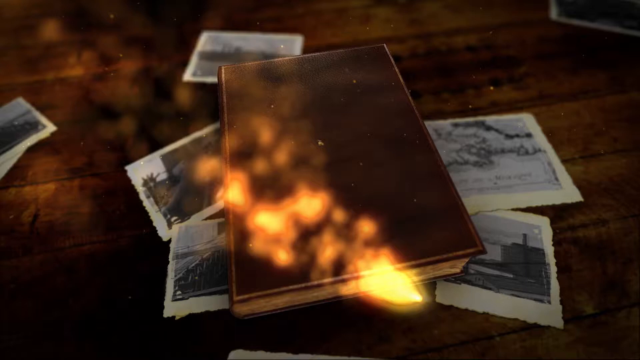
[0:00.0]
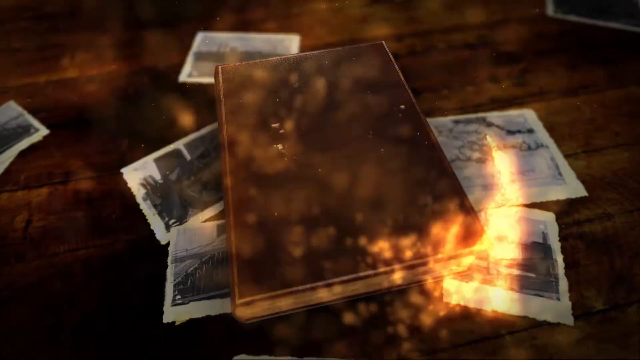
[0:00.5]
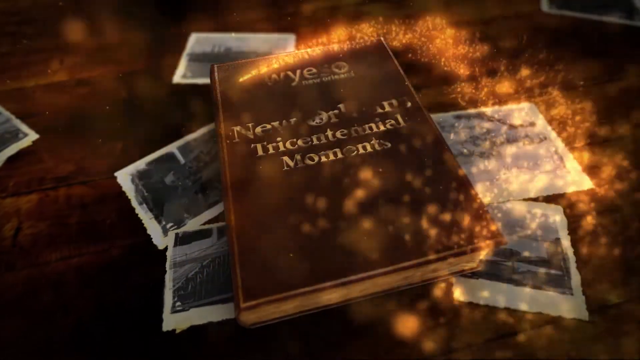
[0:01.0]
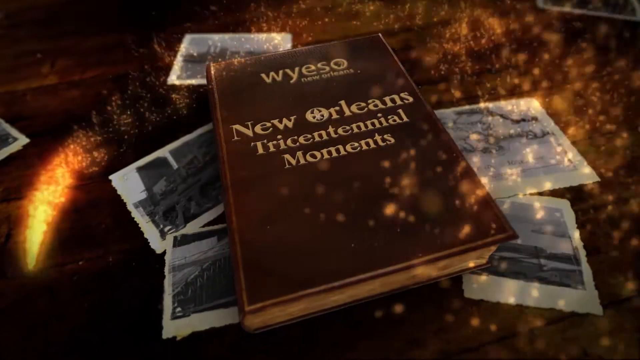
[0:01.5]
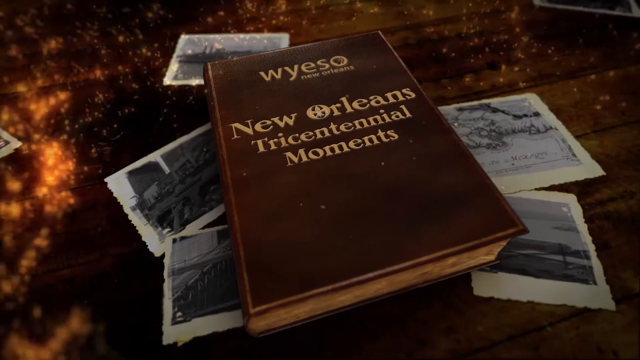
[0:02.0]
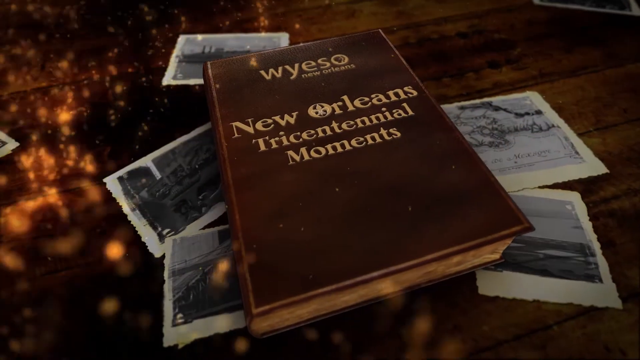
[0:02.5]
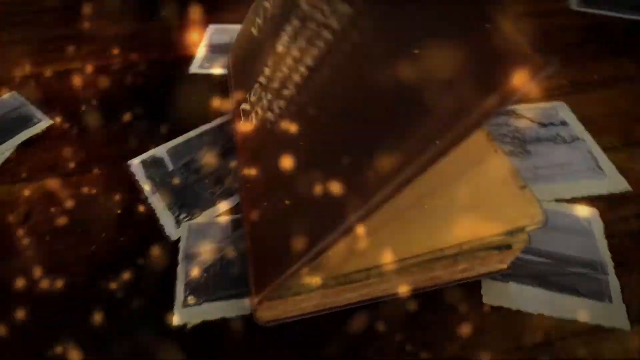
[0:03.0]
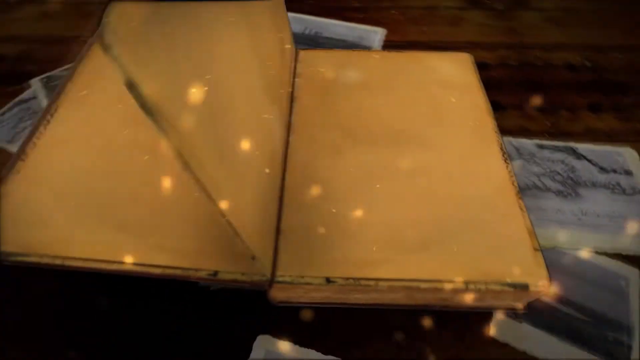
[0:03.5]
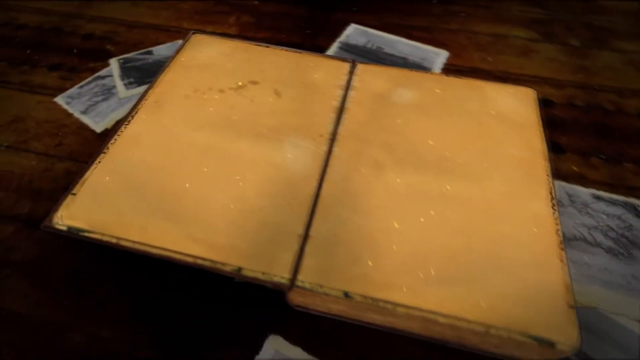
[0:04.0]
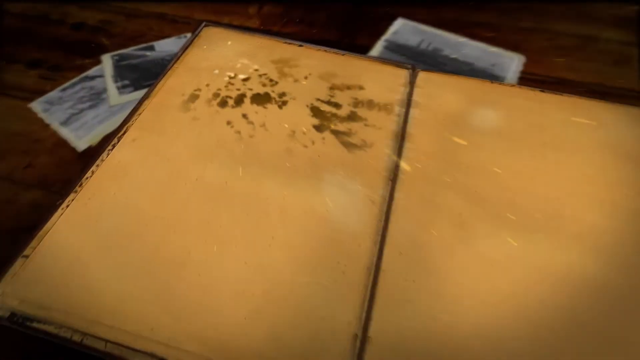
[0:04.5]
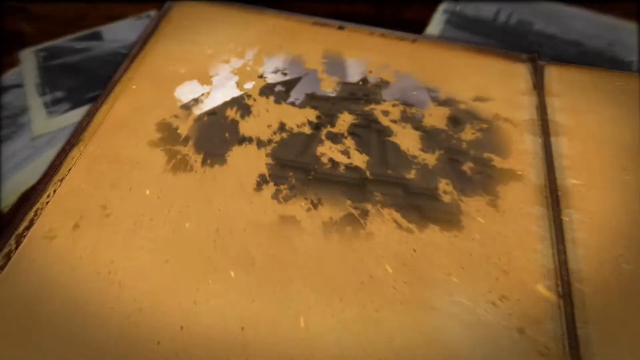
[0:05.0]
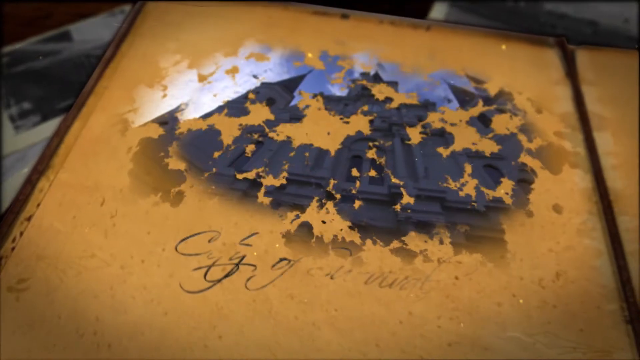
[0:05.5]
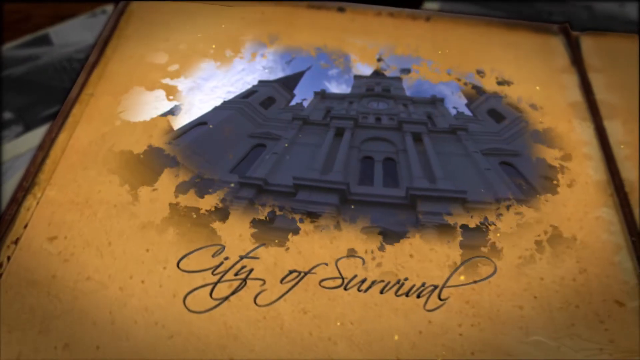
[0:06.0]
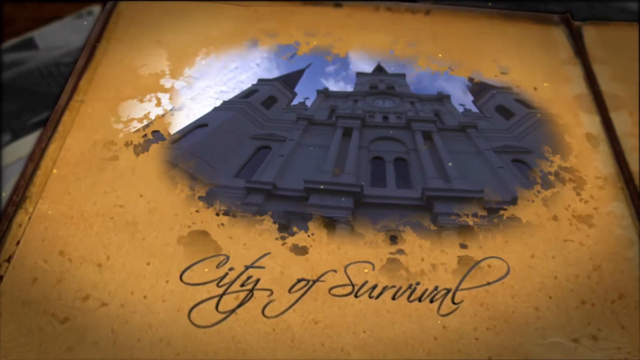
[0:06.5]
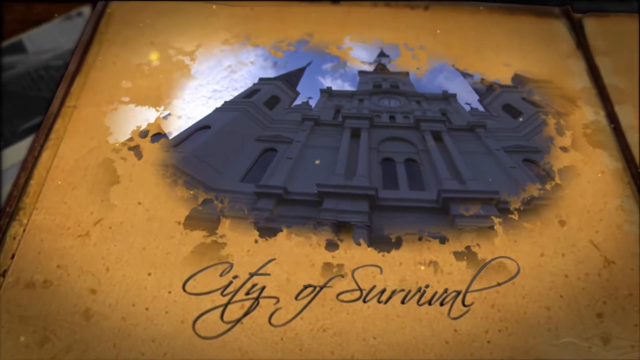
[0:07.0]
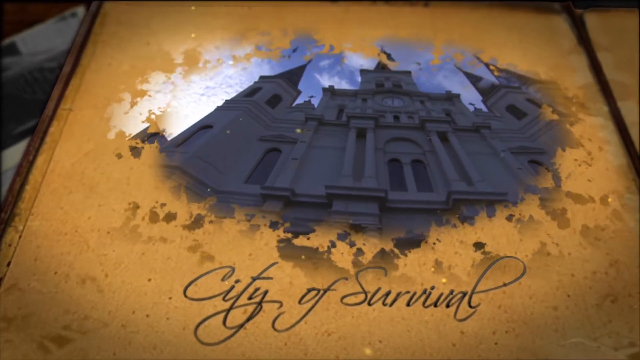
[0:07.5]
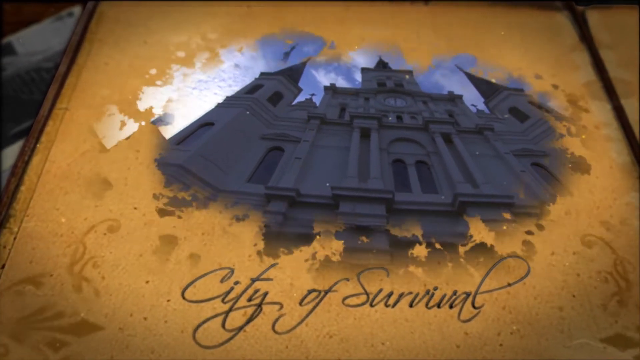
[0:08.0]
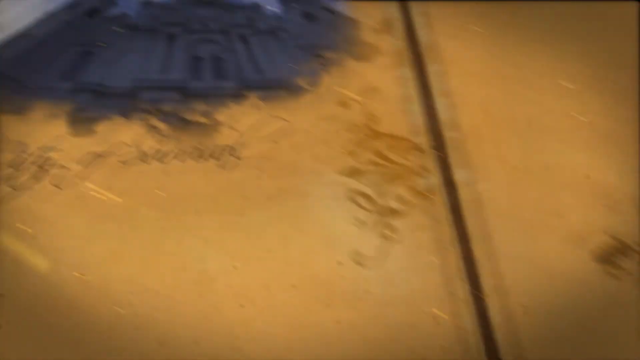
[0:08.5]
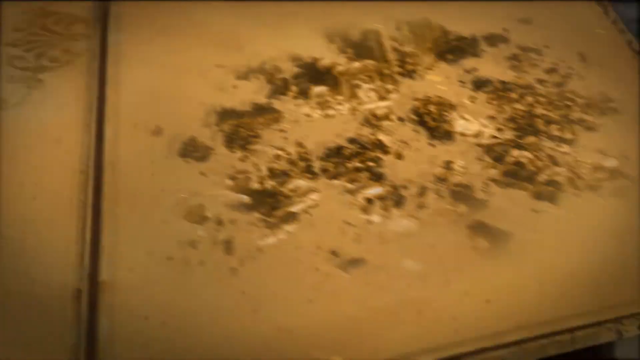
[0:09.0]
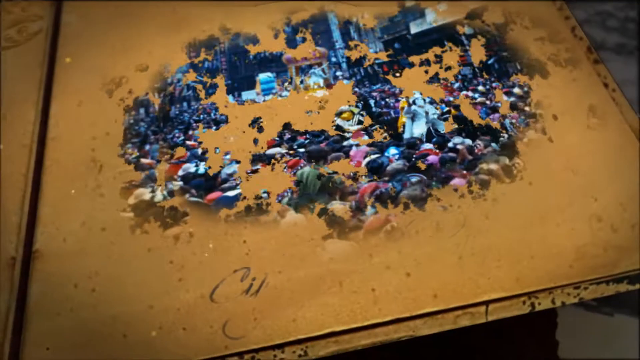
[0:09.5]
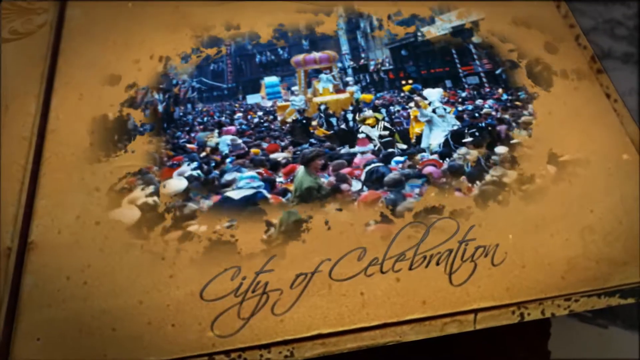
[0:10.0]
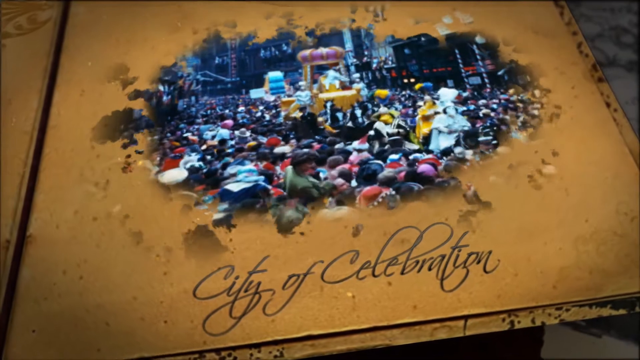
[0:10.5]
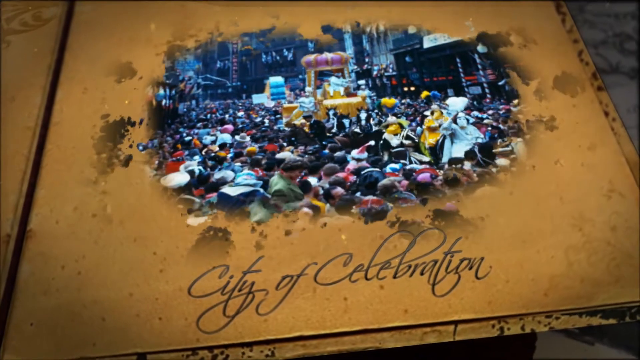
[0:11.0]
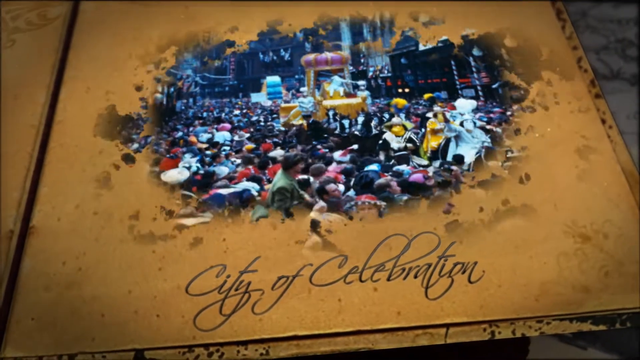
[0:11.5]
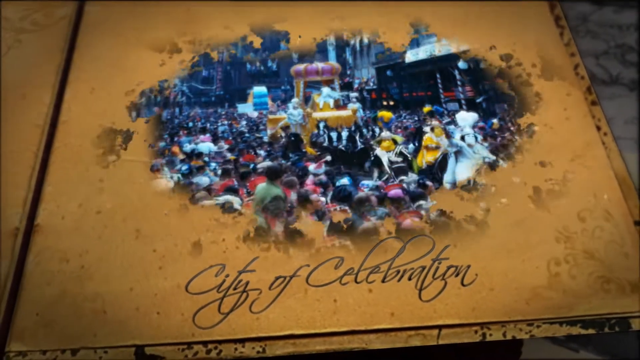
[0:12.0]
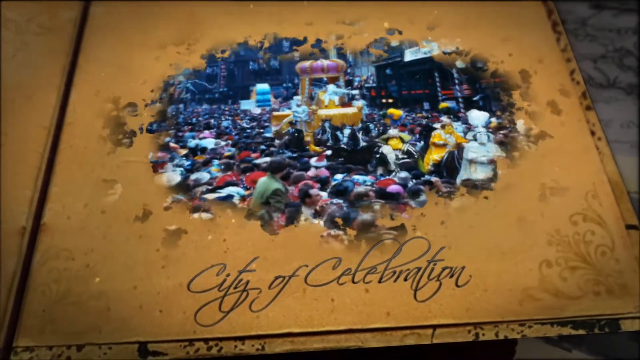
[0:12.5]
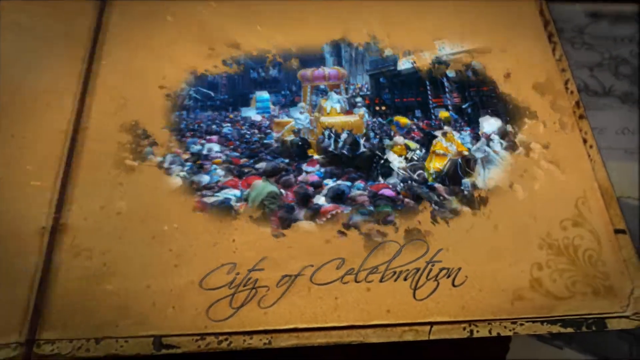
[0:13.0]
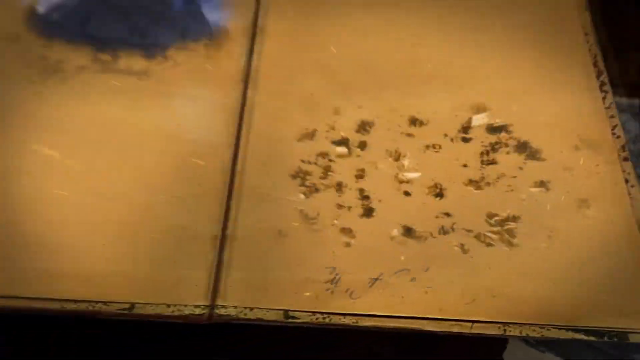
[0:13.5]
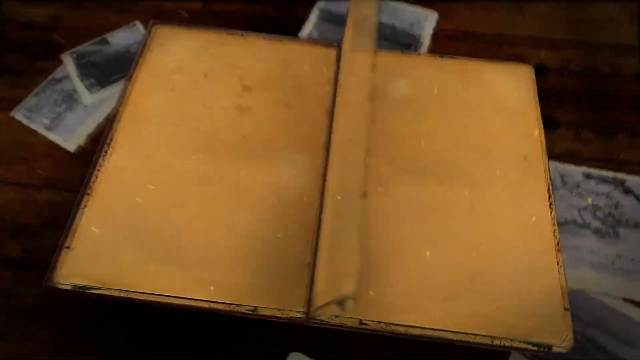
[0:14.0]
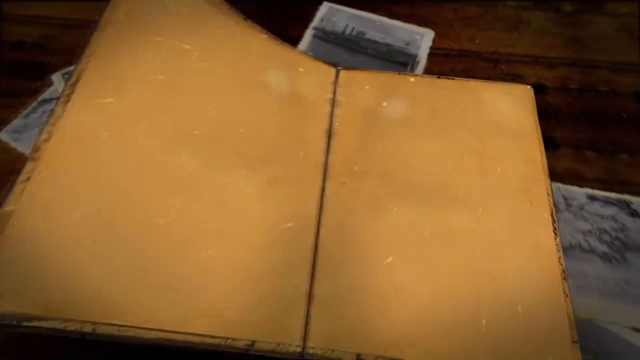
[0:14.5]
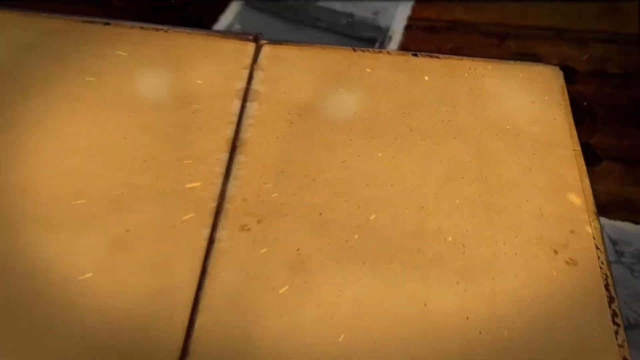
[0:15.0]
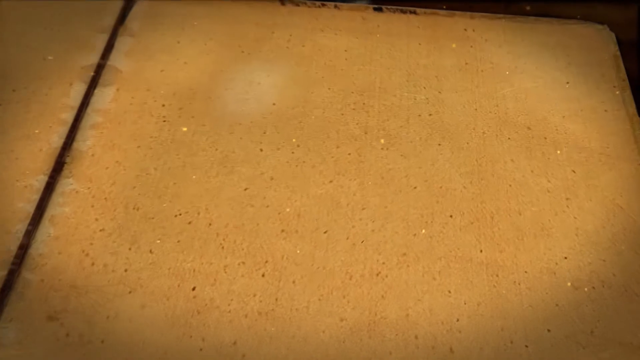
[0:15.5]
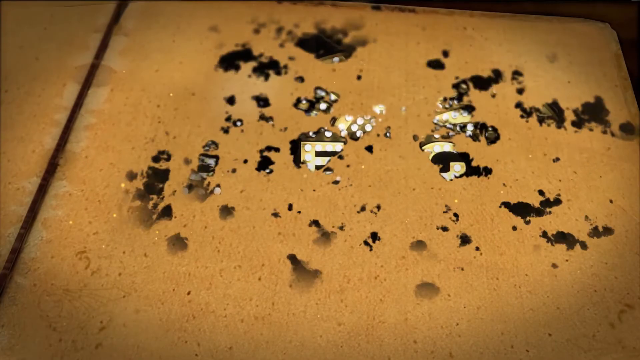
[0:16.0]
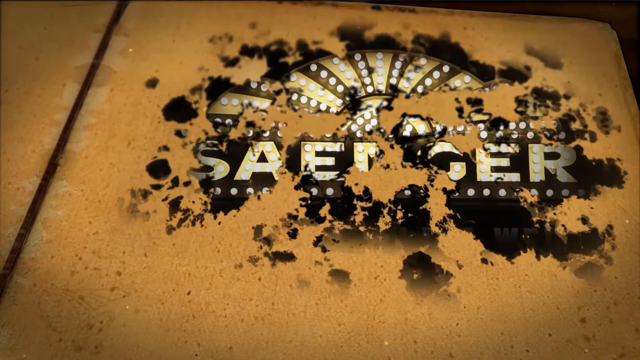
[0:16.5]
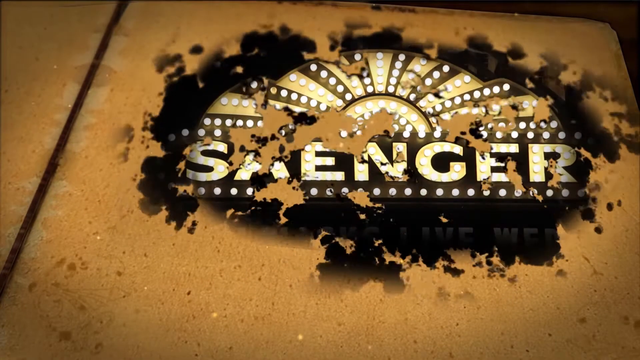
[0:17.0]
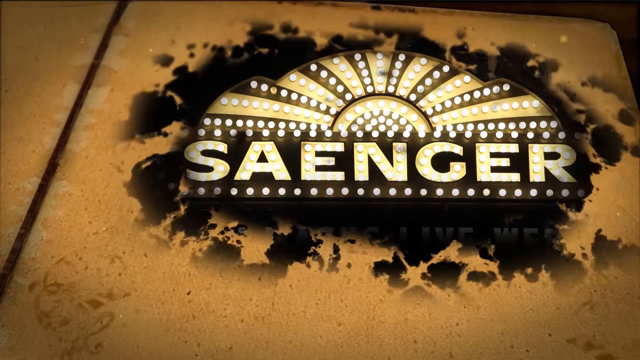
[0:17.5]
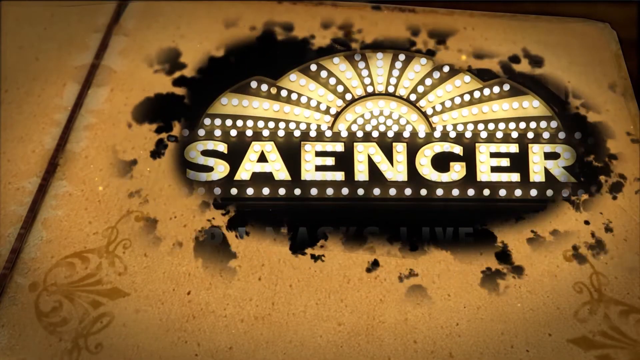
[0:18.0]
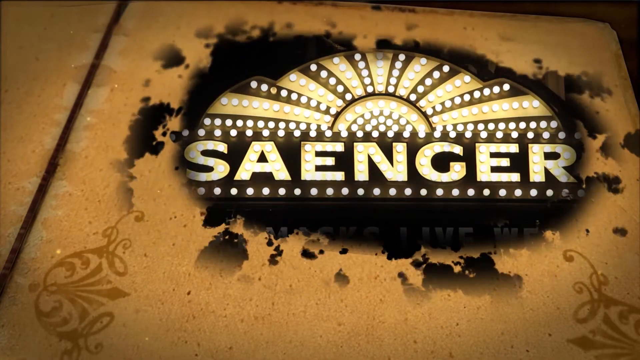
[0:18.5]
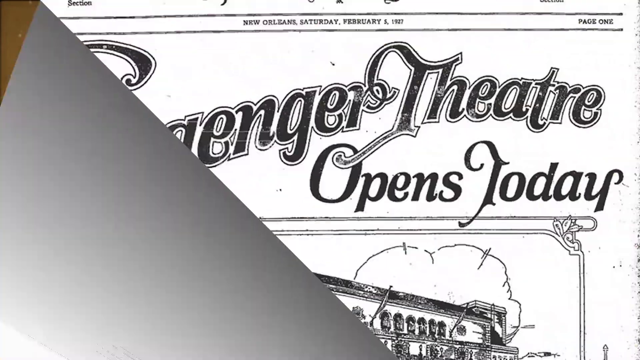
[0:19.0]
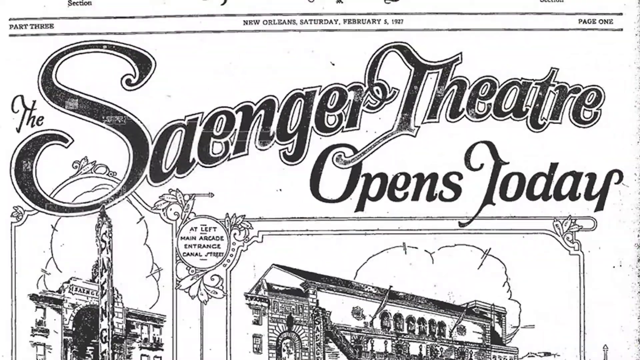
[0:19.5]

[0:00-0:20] A brown book lies on a table, surrounded by black-and-white polaroid pictures, about six of them visible in the frame, and a bit of light shines on the book. Gold sparkles appear, followed by the words "New Orleans Tricentennial Moments." The book opens to show a building with the words "City of Survival," which appear on the book in a kind of magical way. Another scene shows the City of Celebration in a similarly magical way: a circle with people inside it celebrating and having fun. On a different page, the word "Saenger" appears with a bit of light around it, followed by "Saenger Theatre opens today." Resembling an advertisement, the page shows "part three," "New Orleans Saturday, February 5th, 1927" and "page one."